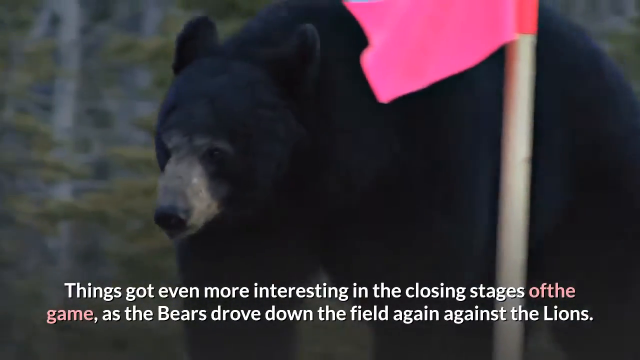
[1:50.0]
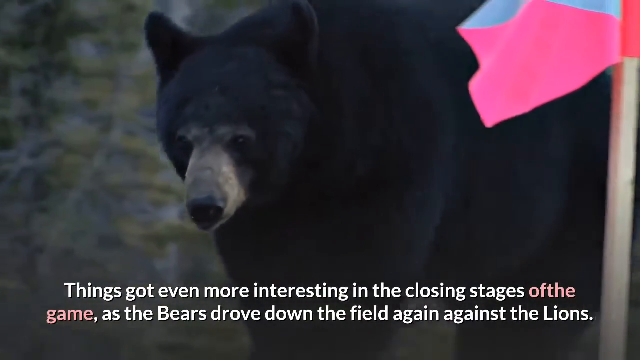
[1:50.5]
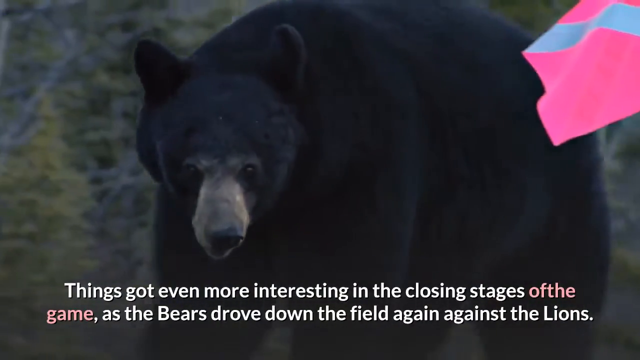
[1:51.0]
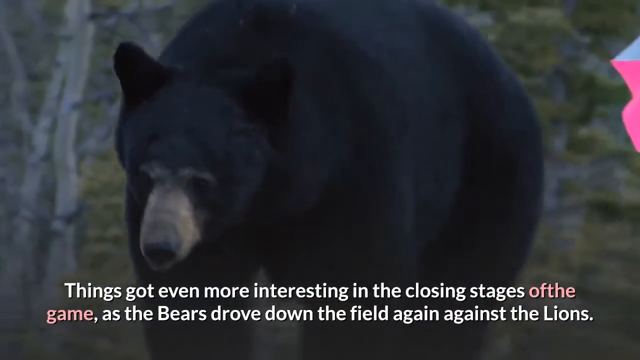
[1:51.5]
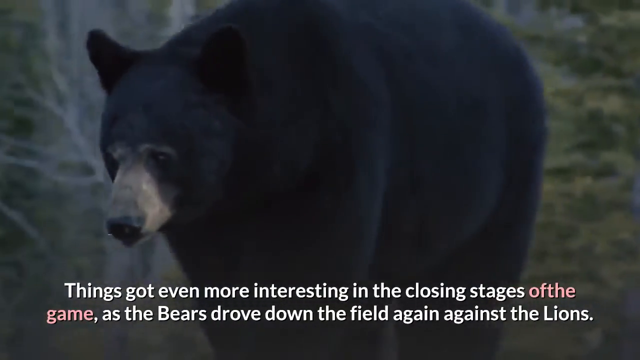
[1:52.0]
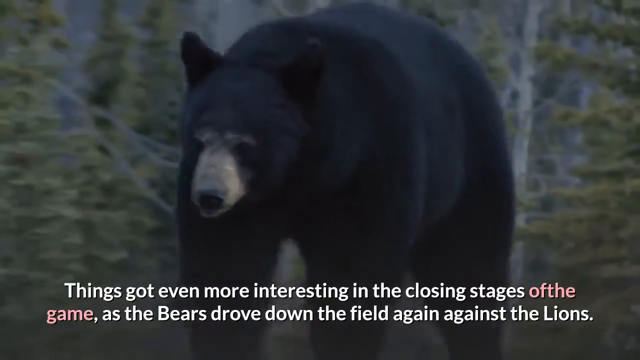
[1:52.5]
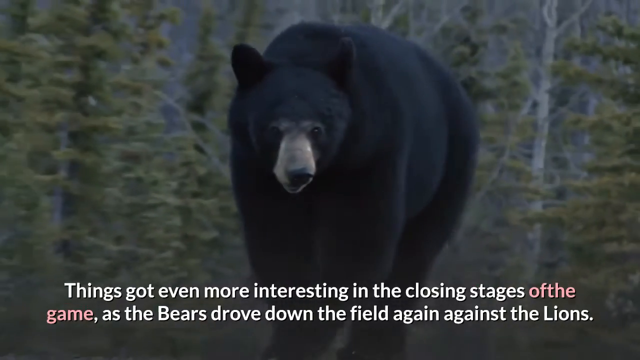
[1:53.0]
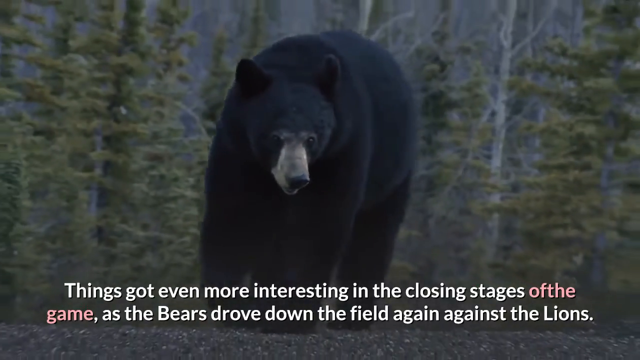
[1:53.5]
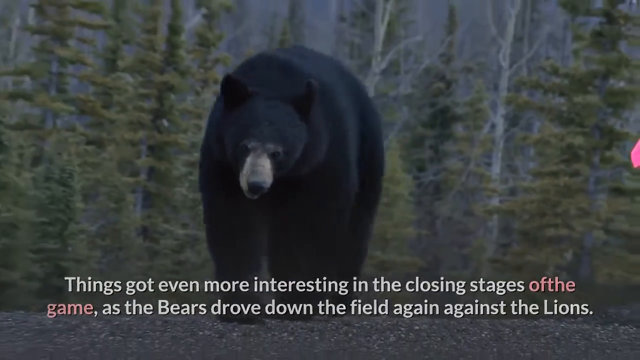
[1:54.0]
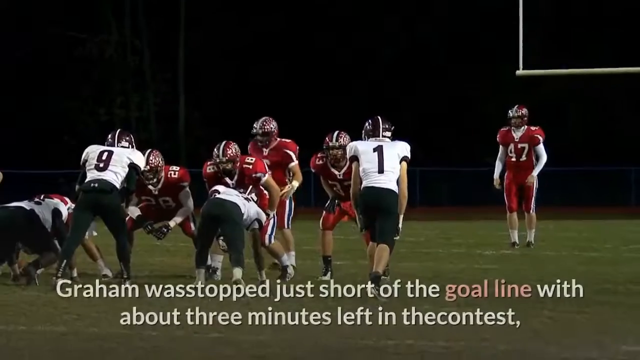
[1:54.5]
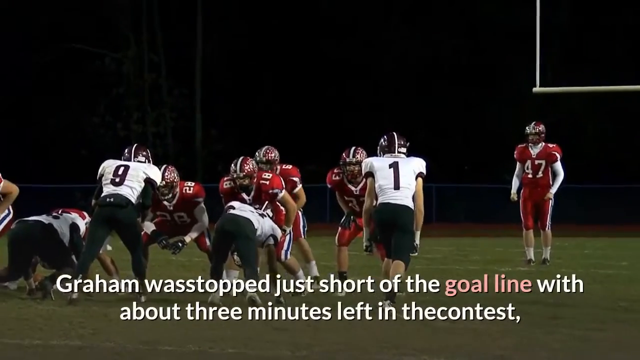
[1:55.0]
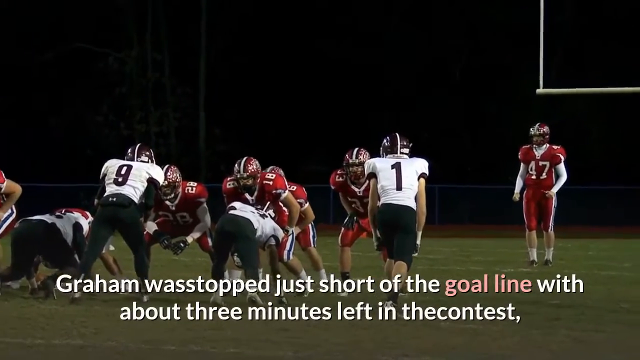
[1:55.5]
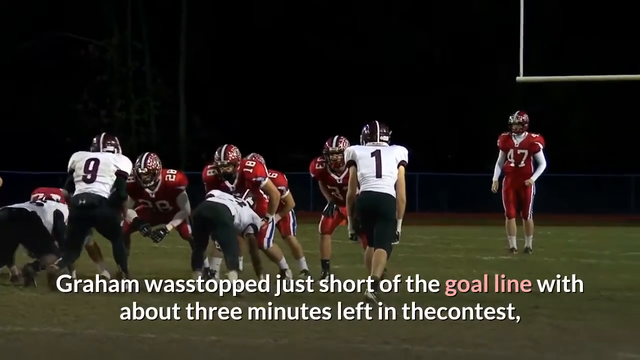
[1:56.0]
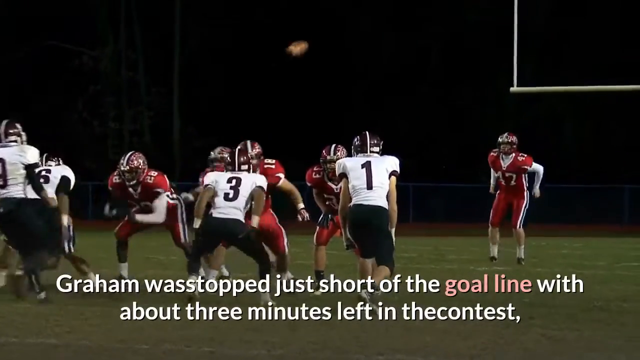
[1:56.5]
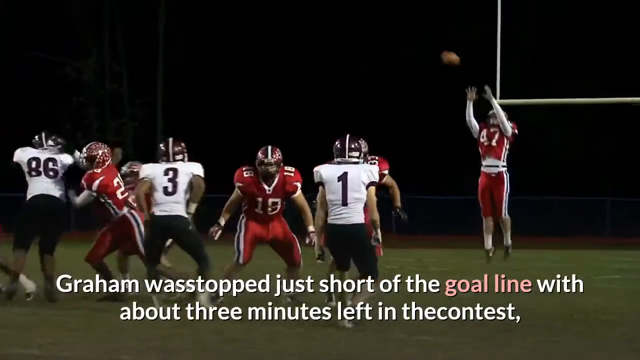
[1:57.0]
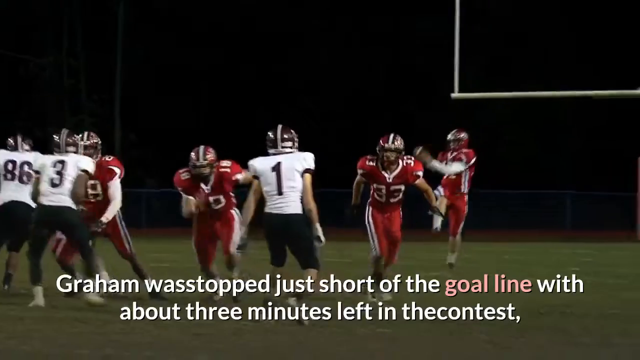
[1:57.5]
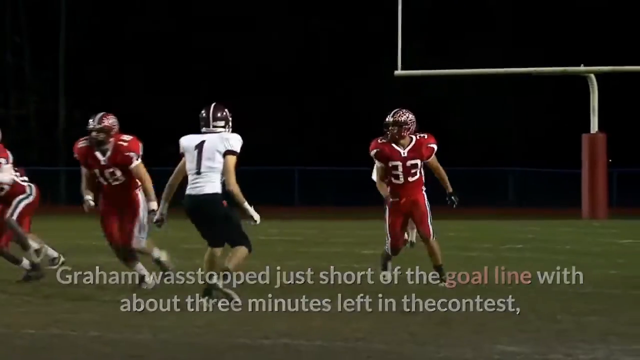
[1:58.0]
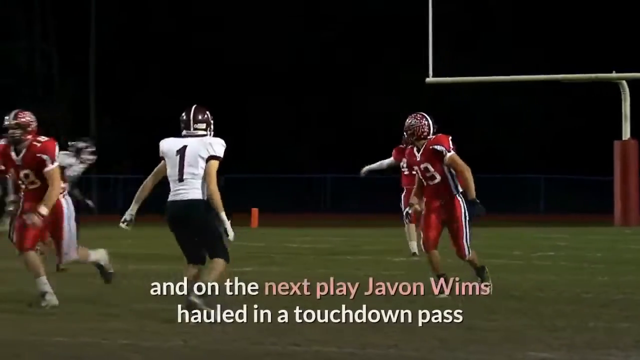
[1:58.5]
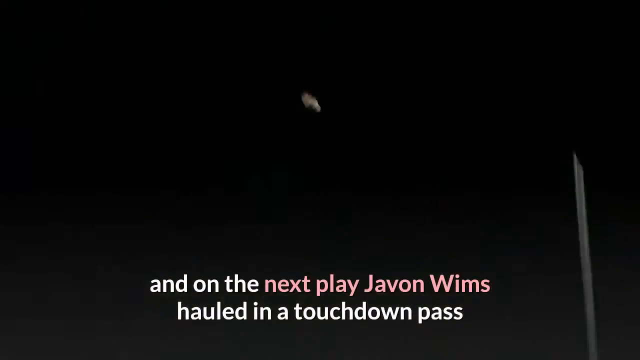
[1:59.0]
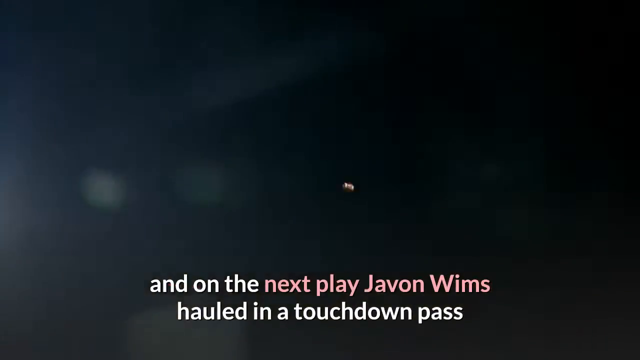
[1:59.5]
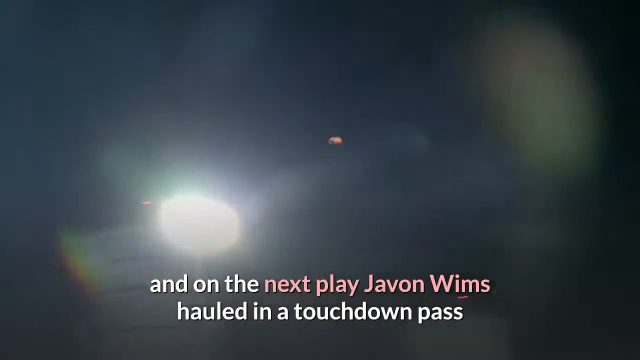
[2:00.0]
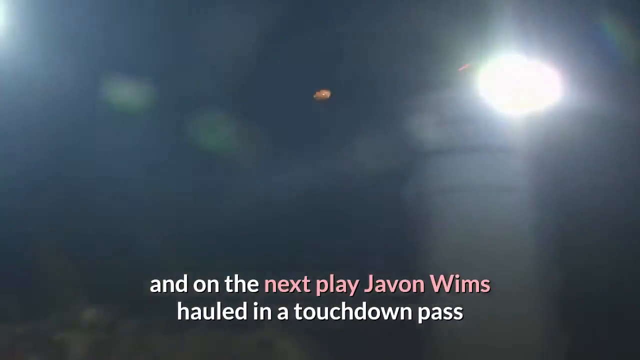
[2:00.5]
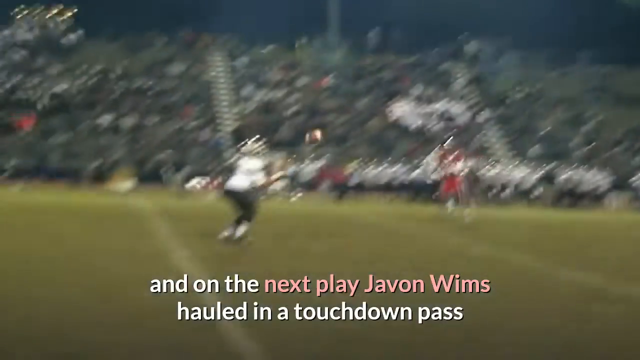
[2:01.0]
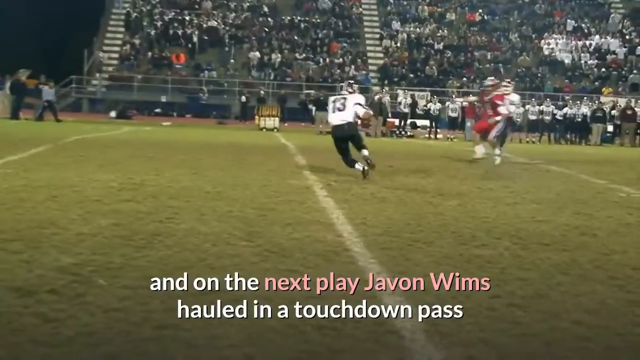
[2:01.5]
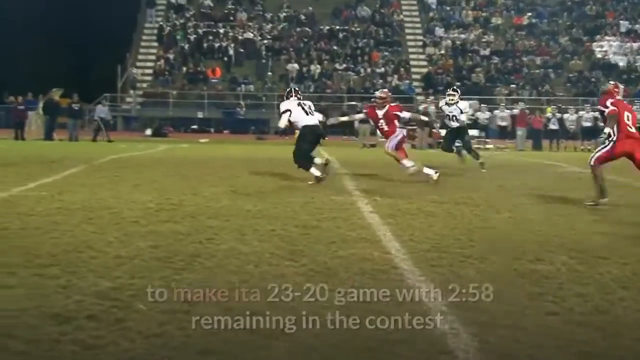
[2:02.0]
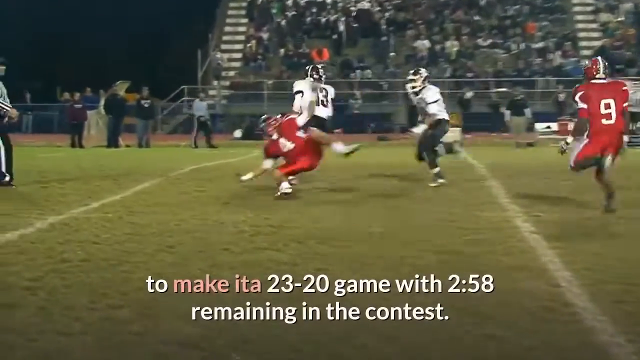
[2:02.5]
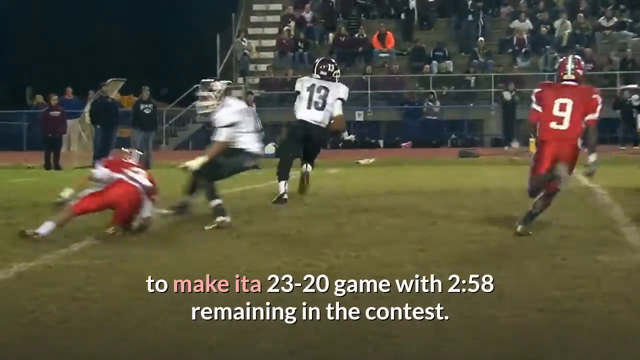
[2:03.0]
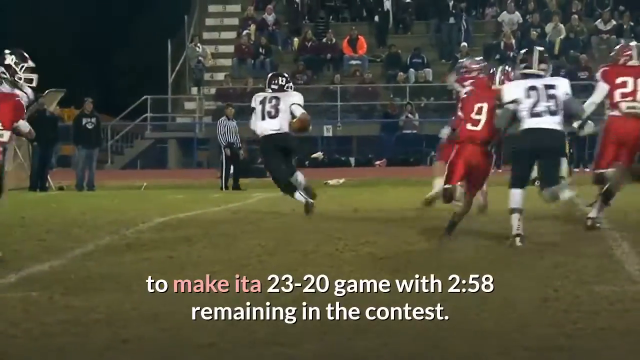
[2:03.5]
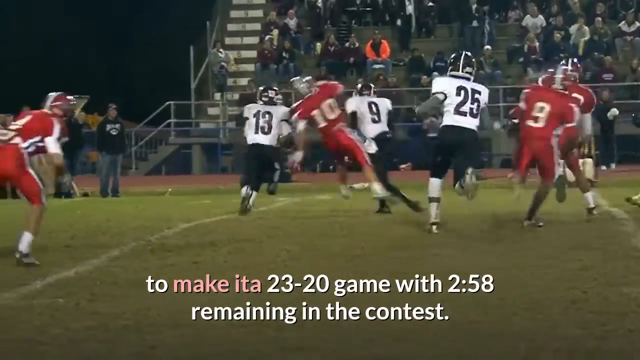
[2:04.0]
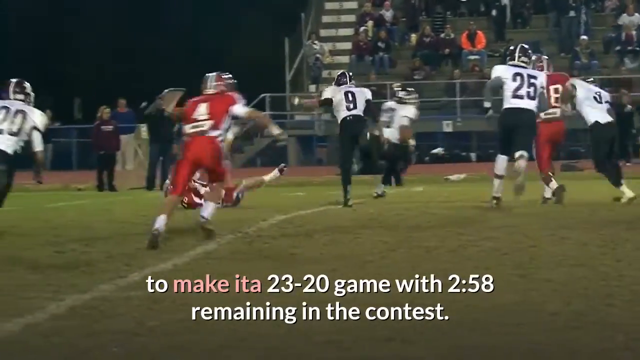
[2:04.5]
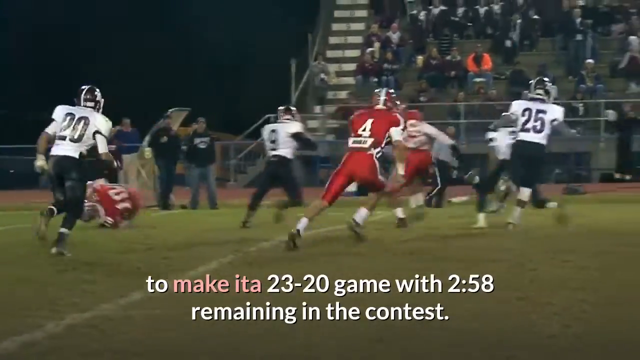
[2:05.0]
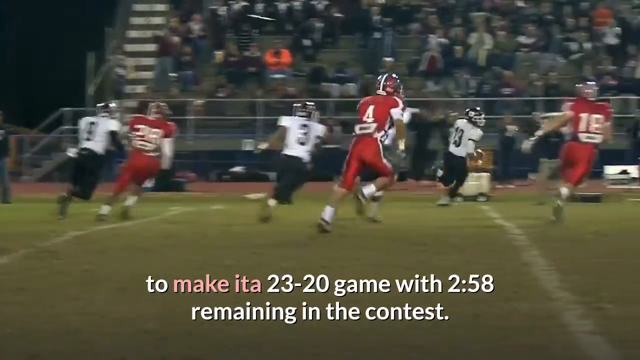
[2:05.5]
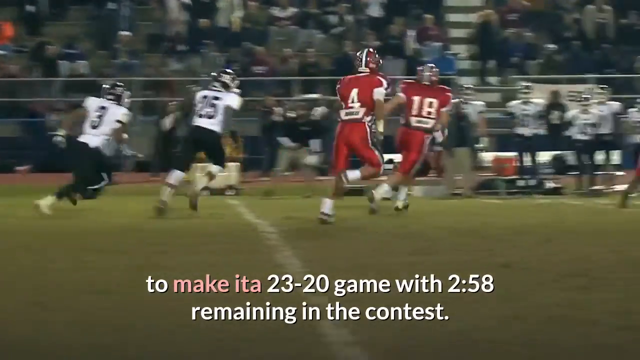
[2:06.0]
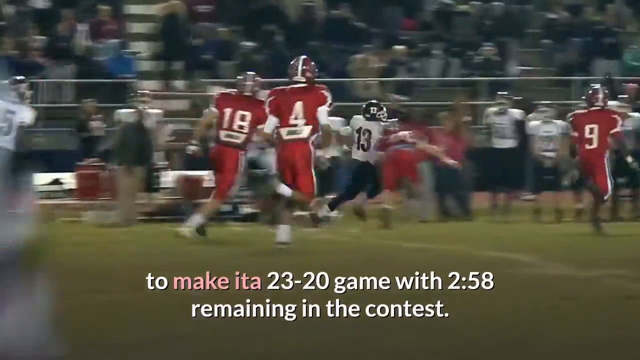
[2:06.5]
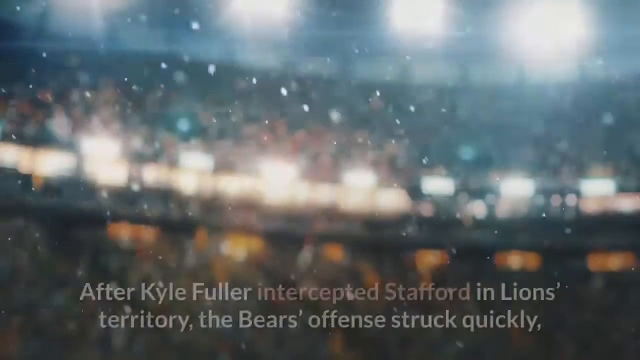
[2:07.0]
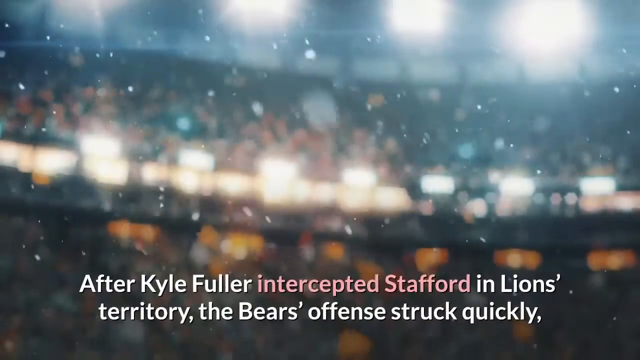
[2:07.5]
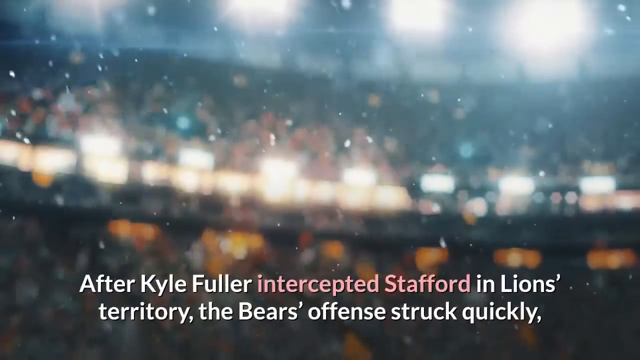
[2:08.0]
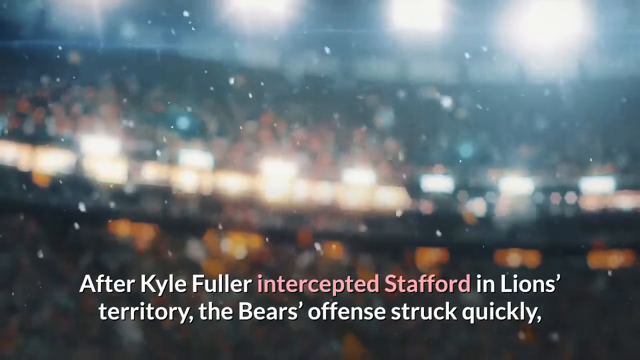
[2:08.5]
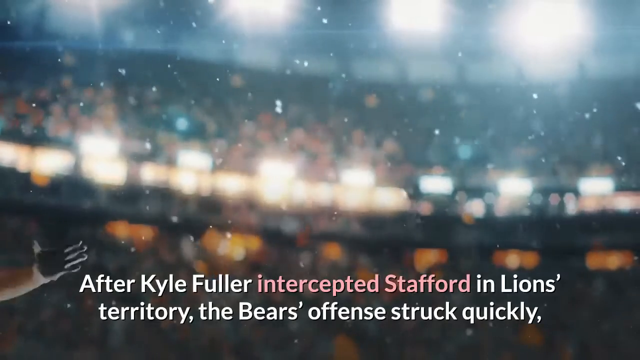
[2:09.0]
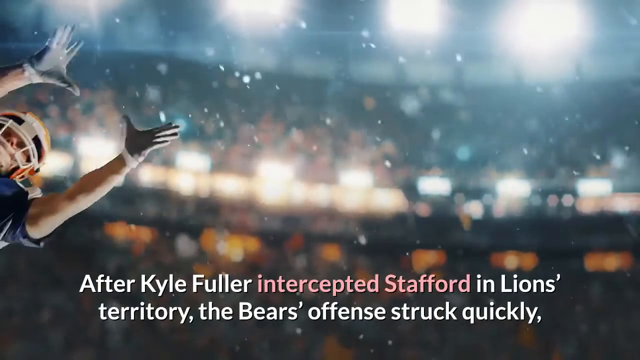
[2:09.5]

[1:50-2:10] The bear passes by a pink flag on a small wooden post. The next screen shows the American football game between the red team and the white team, with text at the bottom reading "Graham was stopped just short of the goal line with about three minutes left in the contest and on the next play." The white team is seen penetrating towards the red team. Next, in what seems like drizzling rain, a man wearing gloves, a blue shirt and a helmet jumps to catch a ball. The text continues, saying that after Kyle Fuller intercepted a pass, "the Bears offense struck quickly."